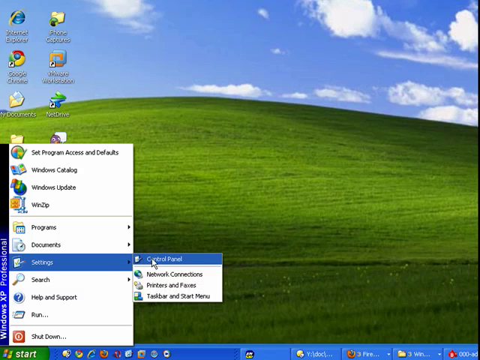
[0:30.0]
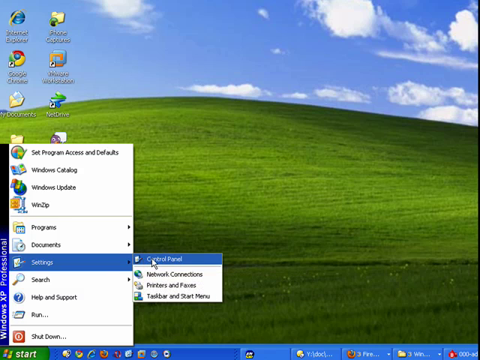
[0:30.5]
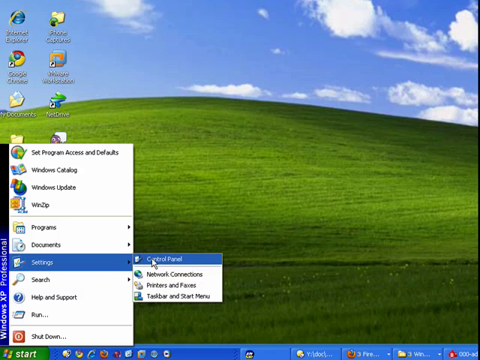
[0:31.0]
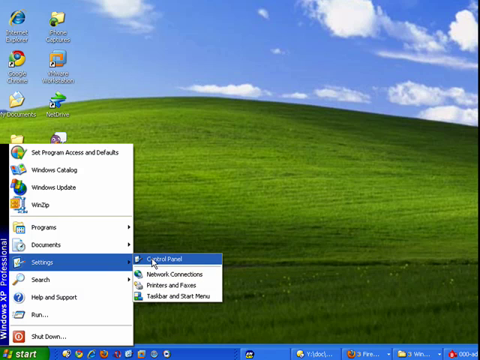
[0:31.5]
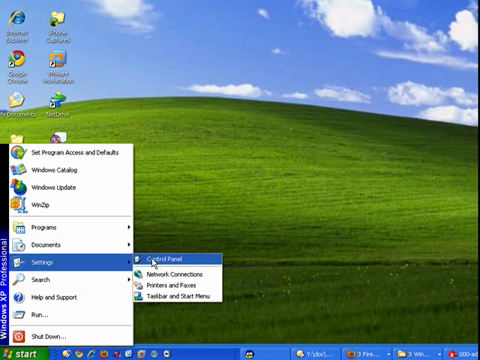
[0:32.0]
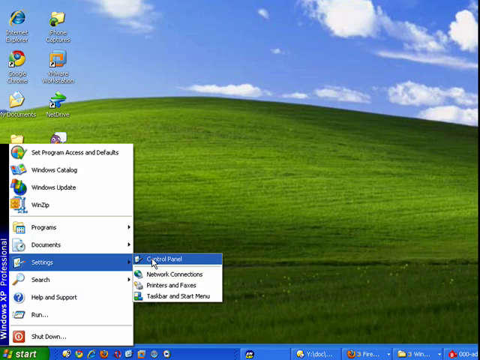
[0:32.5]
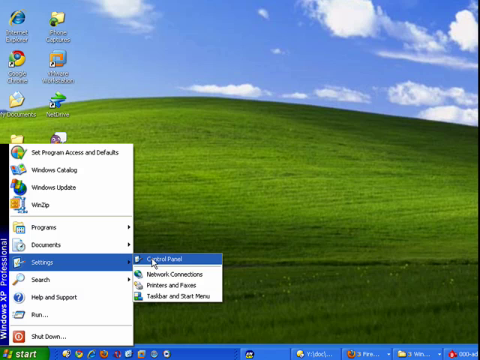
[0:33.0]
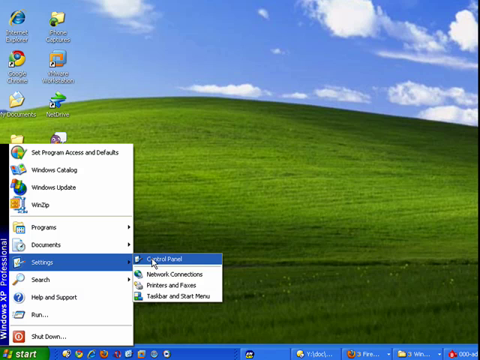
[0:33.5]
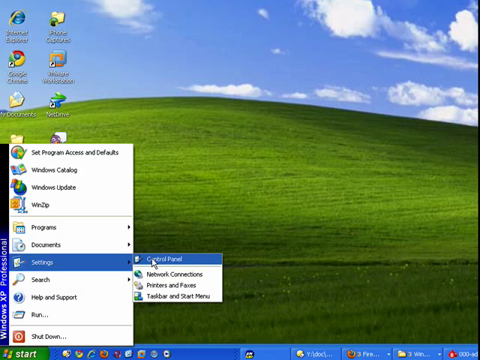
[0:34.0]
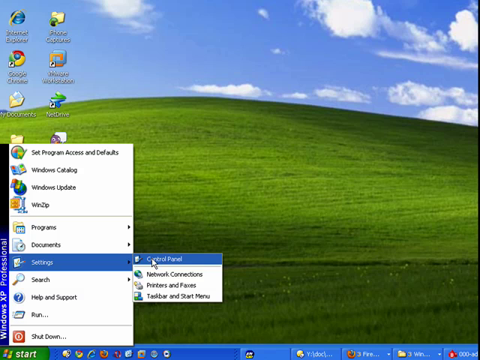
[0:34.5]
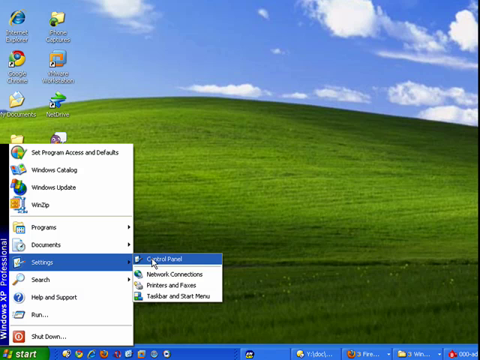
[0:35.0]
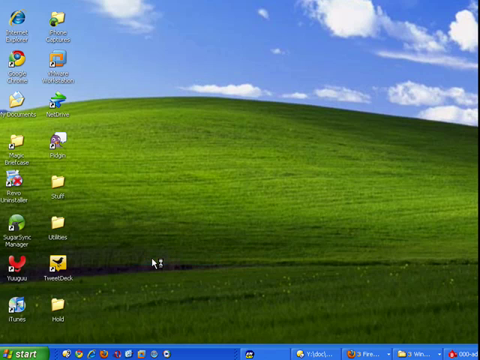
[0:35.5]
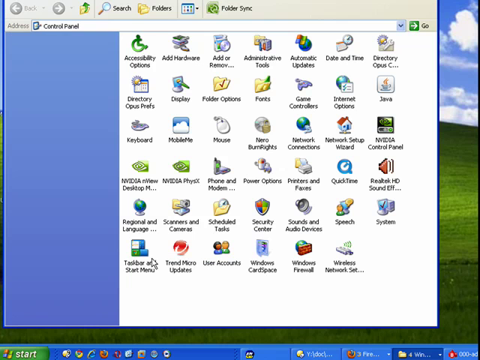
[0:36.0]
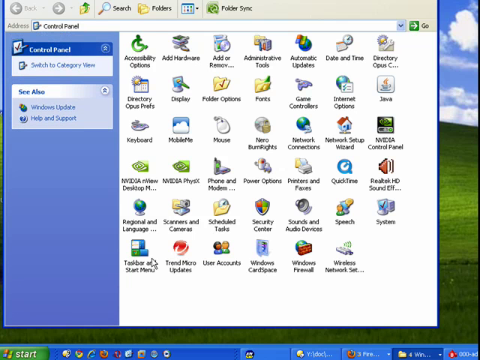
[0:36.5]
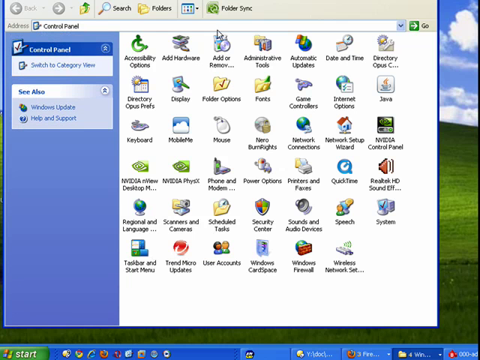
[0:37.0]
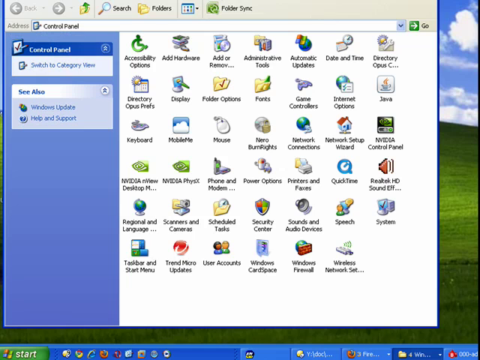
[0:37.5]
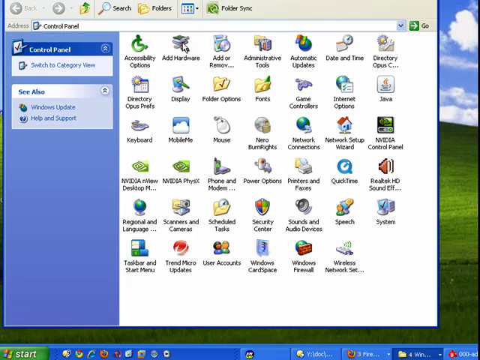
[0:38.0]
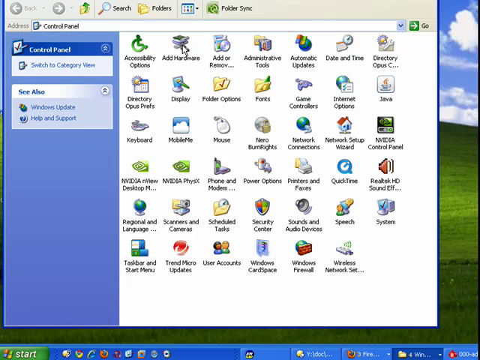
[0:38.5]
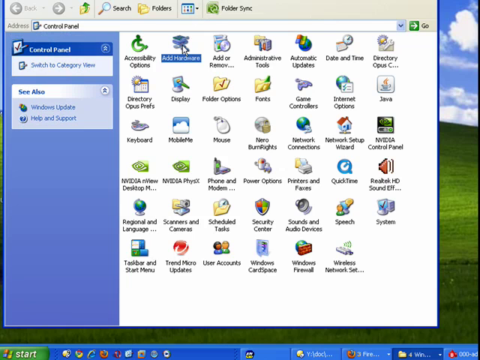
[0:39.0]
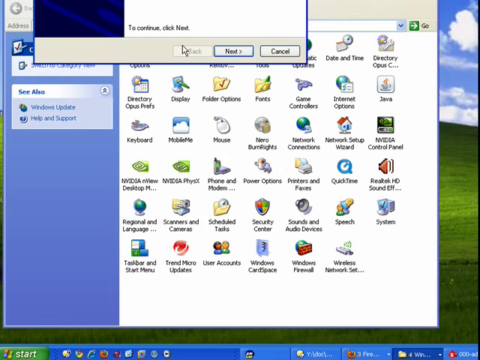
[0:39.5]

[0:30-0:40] On a computer, someone controls the cursor. They click settings and then the panel they want, and an entire page of icons pops up. The person moves the cursor to the icon they want to change, goes up to the top of the browser and clicks on something. The screen then returns to the green grassy hill and the blue sky with some sporadic clouds; the grass has shadings of darker and lighter green, and there look to be some weeds at the very bottom. It stays on settings and control, with the icon pointing to the control.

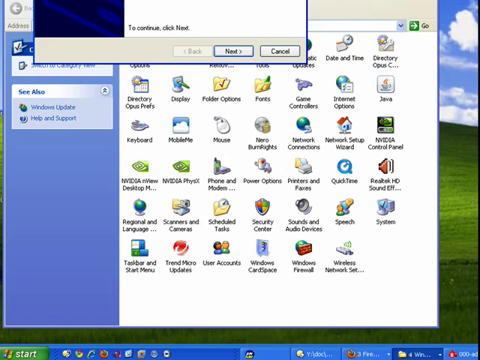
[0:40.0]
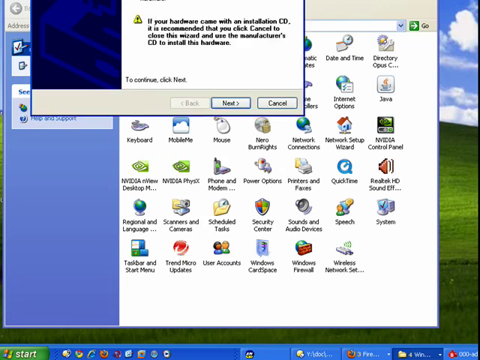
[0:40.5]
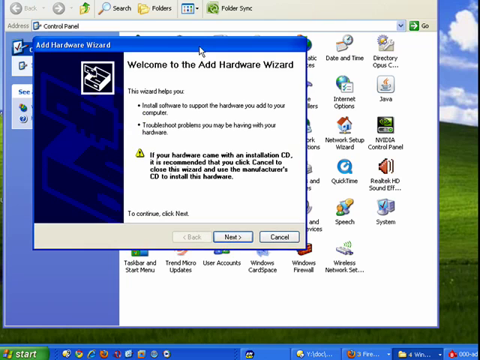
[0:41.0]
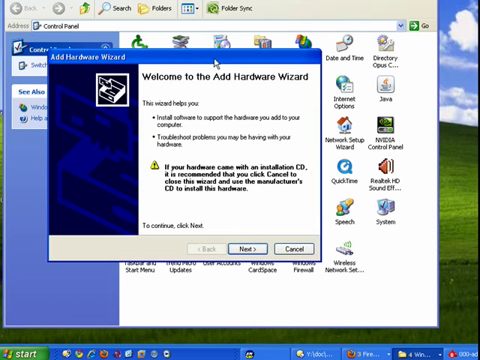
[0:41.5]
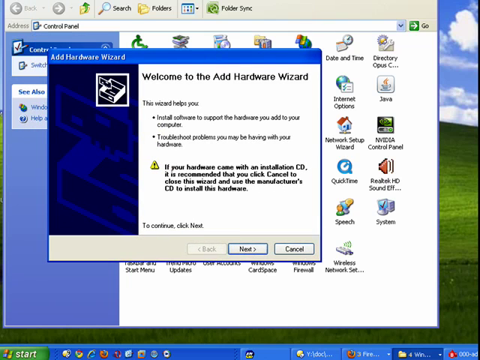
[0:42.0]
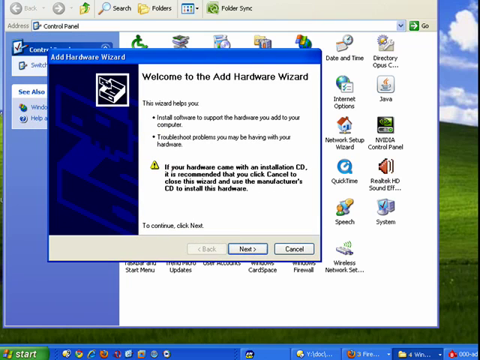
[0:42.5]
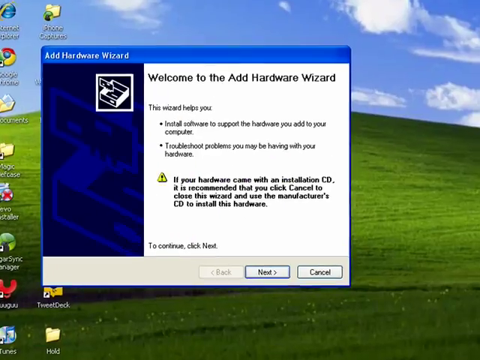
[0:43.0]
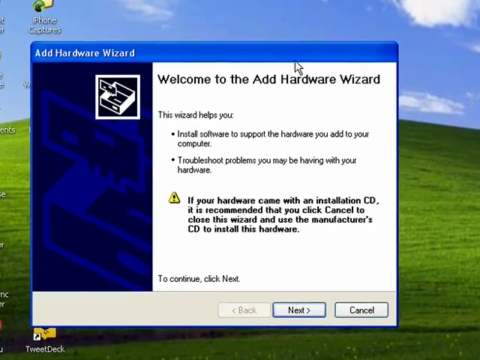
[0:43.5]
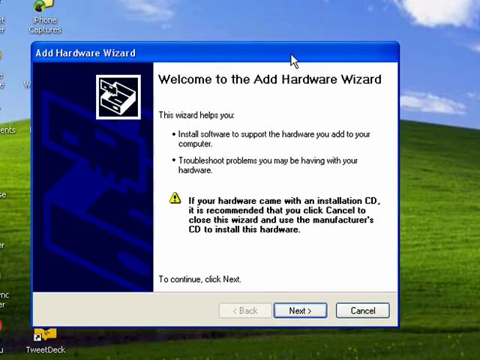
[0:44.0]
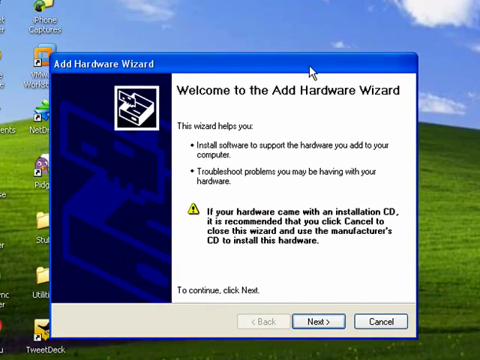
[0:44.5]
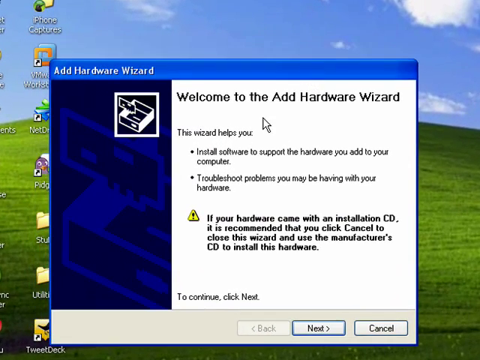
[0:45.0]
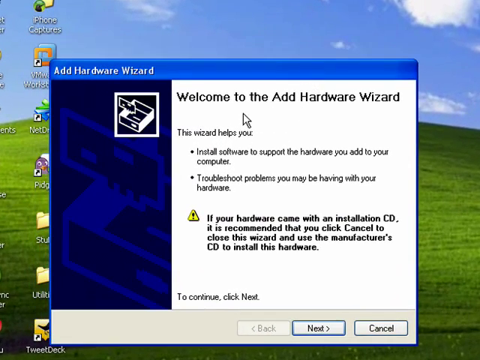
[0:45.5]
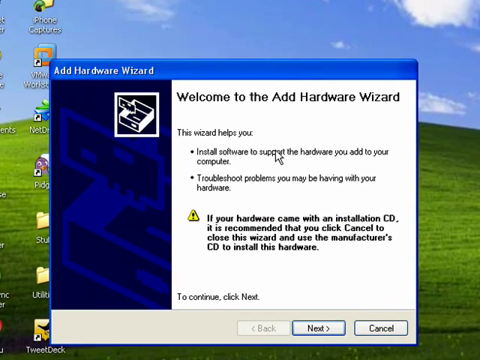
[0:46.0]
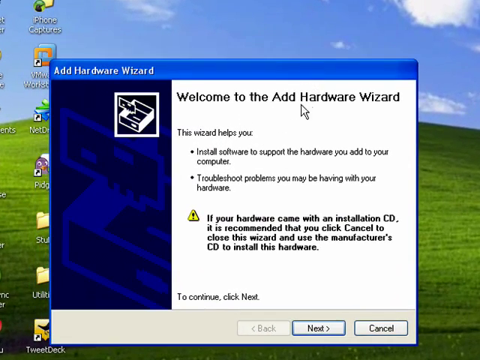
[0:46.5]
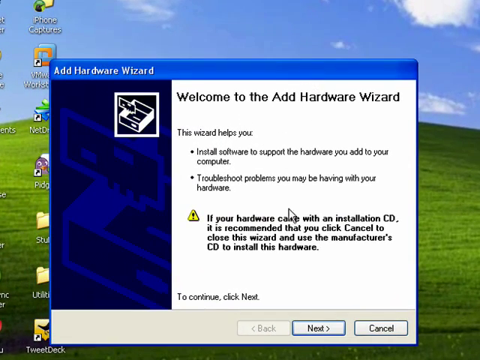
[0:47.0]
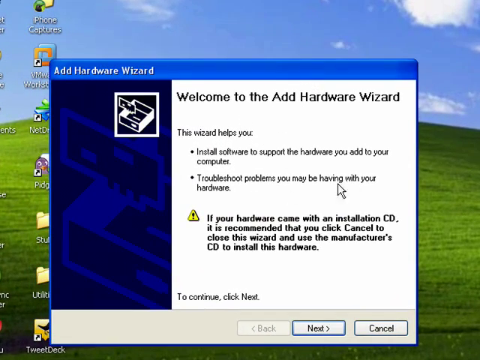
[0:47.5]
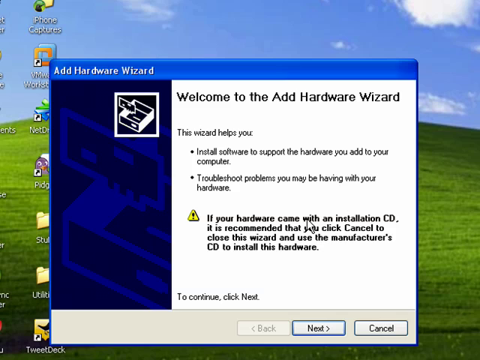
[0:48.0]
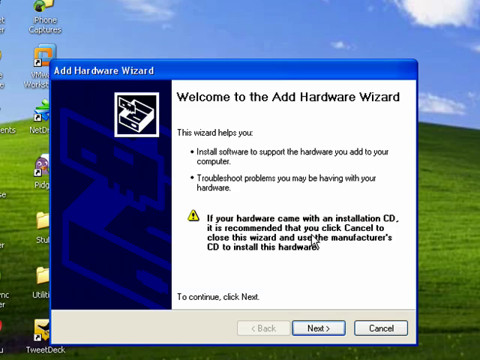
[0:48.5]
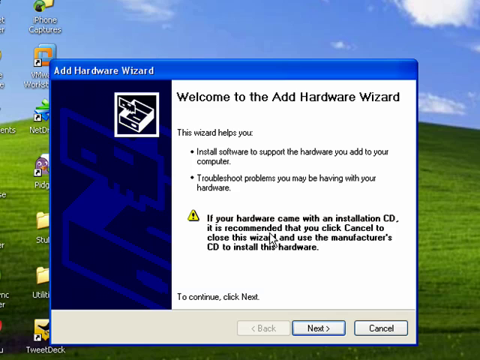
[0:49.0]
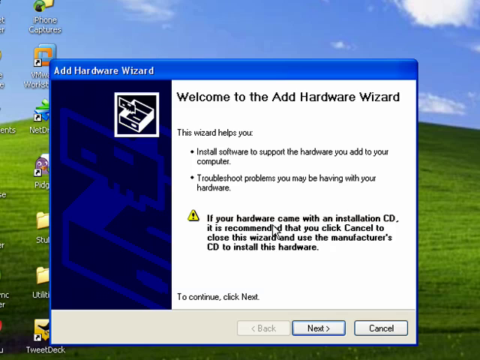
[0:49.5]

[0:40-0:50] A computer screen shows text reading "welcome to the add hardware wizard." Someone is controlling a cursor, and they move the whole box down. There is a pop-up at the top of the page and a page full of icons, with the cursor controlling what is shown. The hardware wizard appears again. The computer's backdrop with the standard icons on the left-hand side is visible. There are many icons to click on, a really big selection on this page. When the add hardware wizard page comes up, it has next and cancel options, and it describes how to troubleshoot and fix hardware problems.